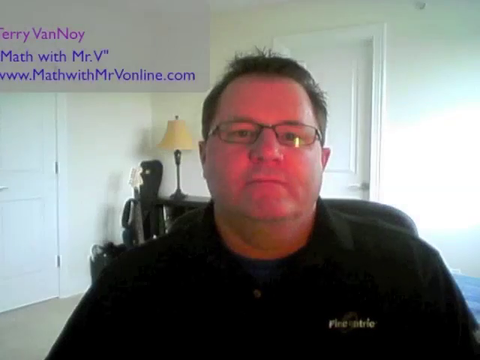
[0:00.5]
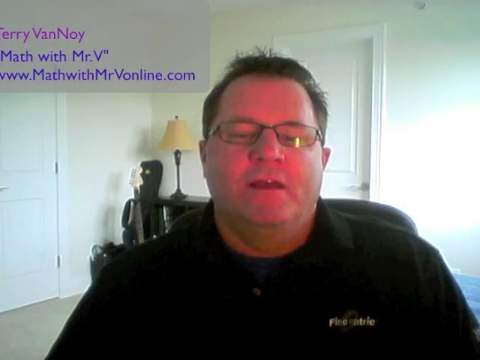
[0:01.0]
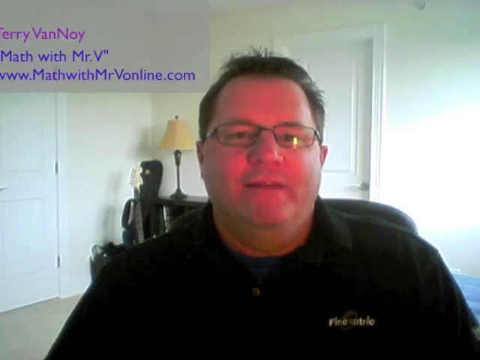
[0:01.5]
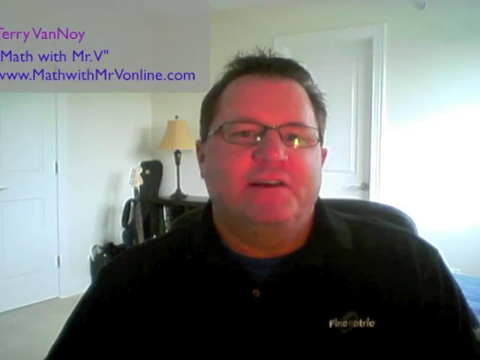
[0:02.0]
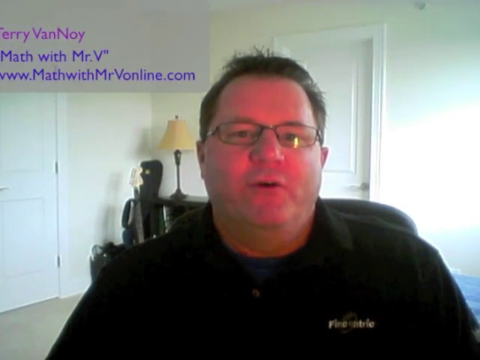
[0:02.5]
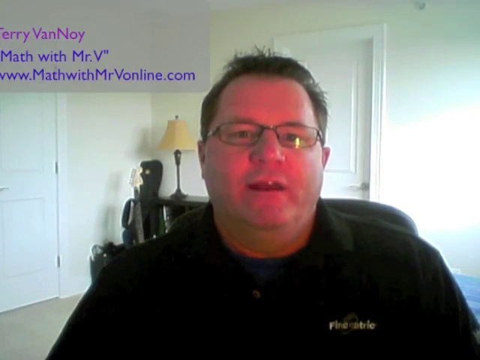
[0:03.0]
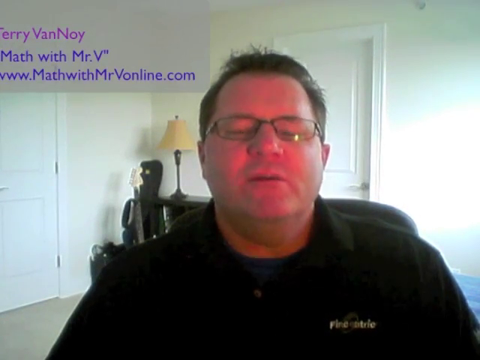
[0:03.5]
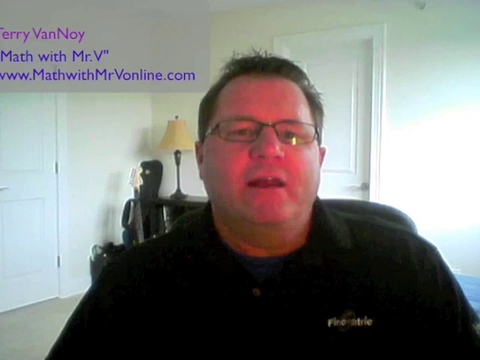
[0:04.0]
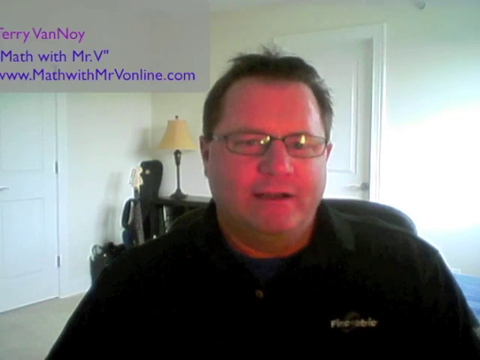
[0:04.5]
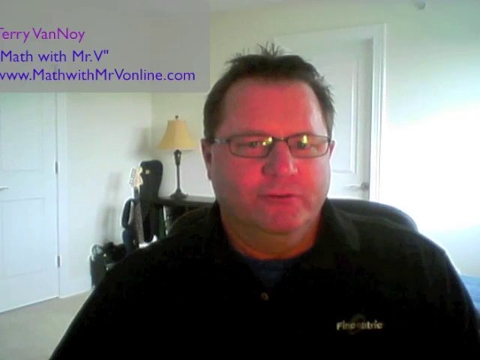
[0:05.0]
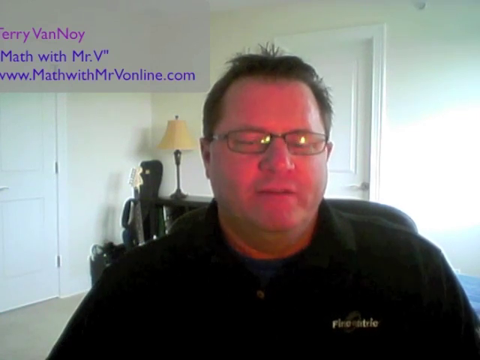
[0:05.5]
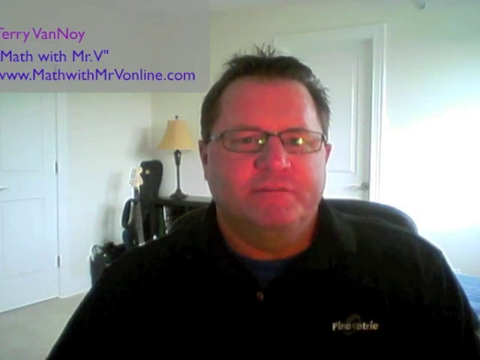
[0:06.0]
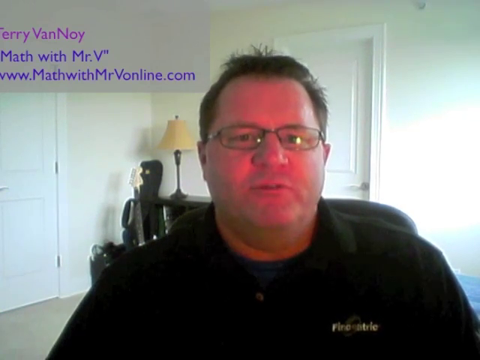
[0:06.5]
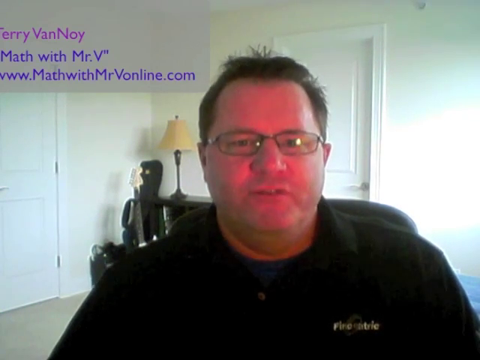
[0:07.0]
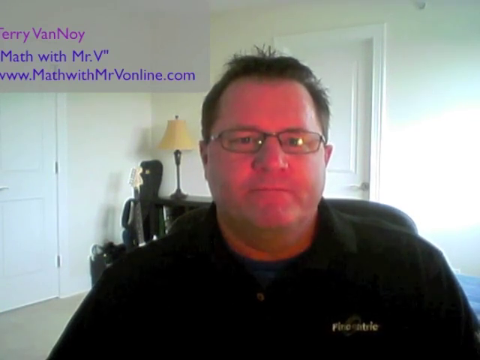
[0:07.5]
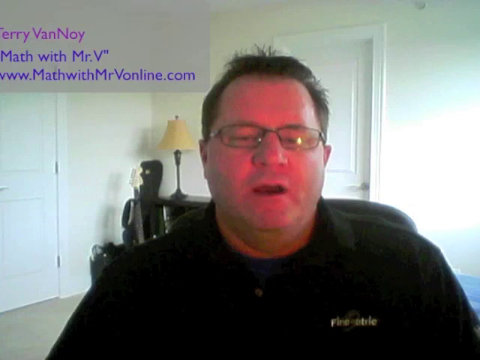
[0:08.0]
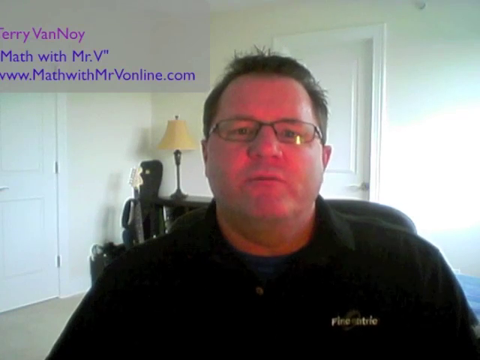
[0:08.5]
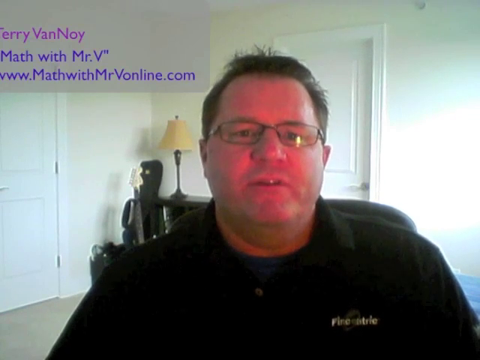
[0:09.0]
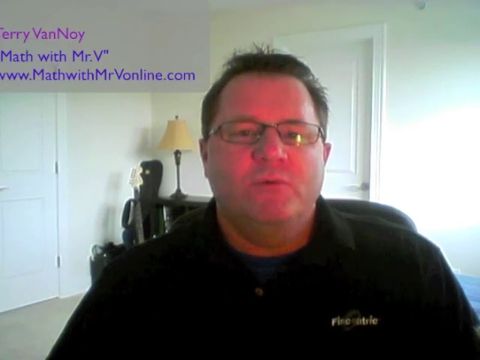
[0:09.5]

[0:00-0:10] A man who looks to be in his mid-30s to early 40s appears, wearing glasses, with his head tilted back slightly. He looks a little overweight and has short brown hair parted on the right, sticking up a little here and there. In the top right corner, text reads "Terry Von Noy math with Mr. V www.mathwithmrvonline.com". He wears a black button-up shirt and an undershirt, with writing on the shirt that cannot quite be read. As he talks, he bobs his head around a little and slowly leans forward, in and out.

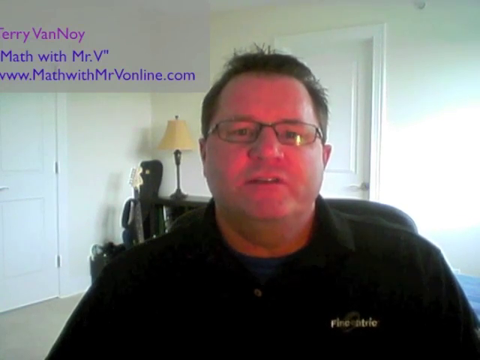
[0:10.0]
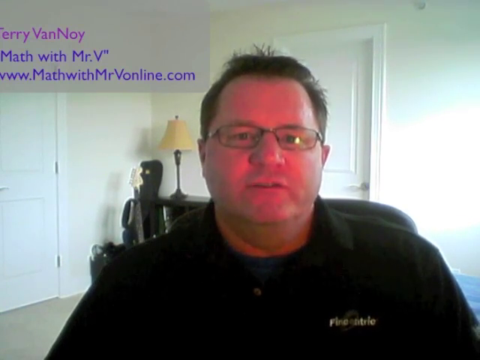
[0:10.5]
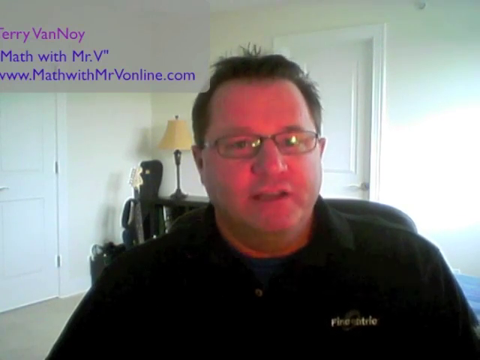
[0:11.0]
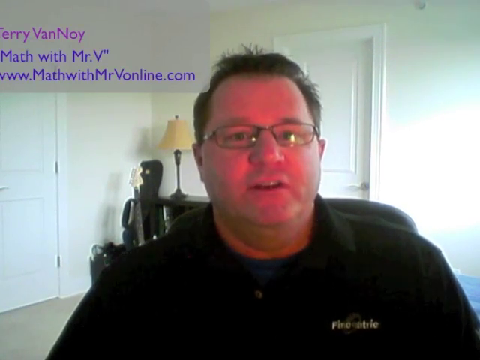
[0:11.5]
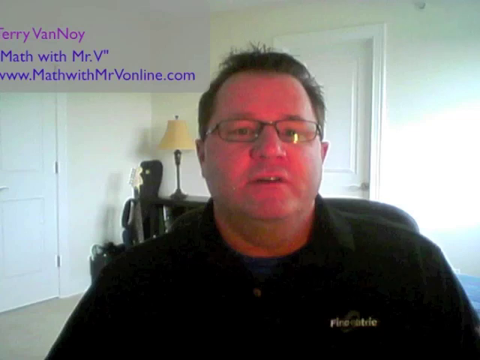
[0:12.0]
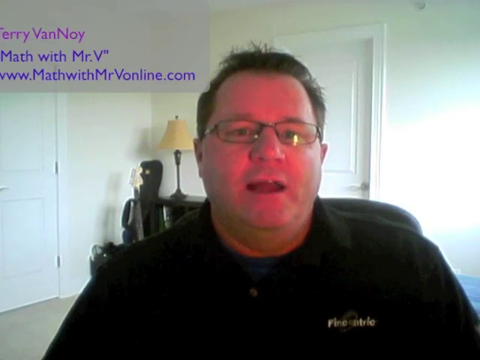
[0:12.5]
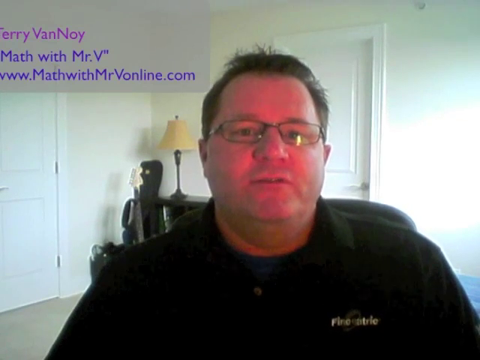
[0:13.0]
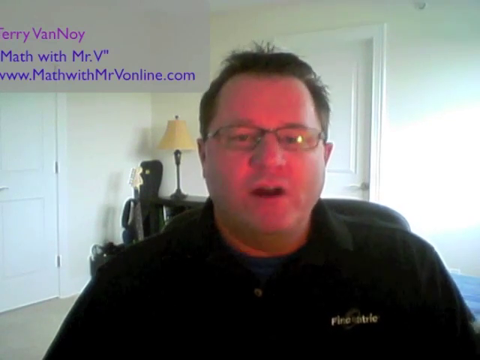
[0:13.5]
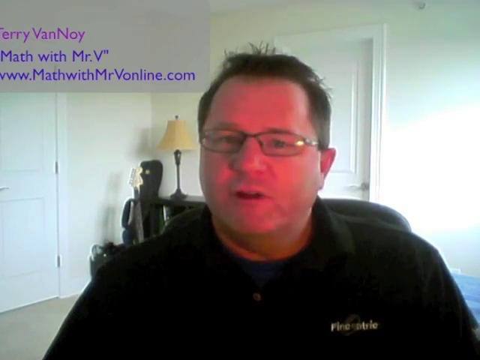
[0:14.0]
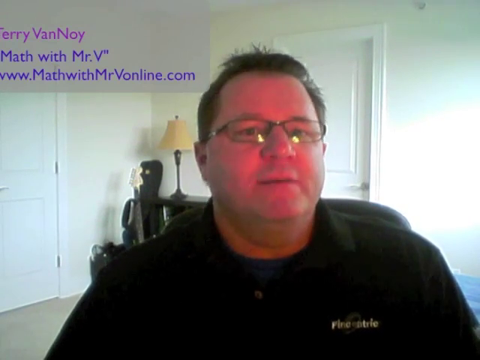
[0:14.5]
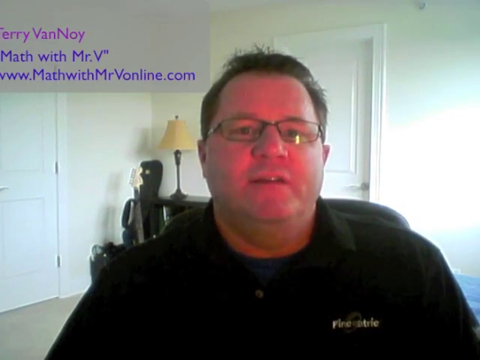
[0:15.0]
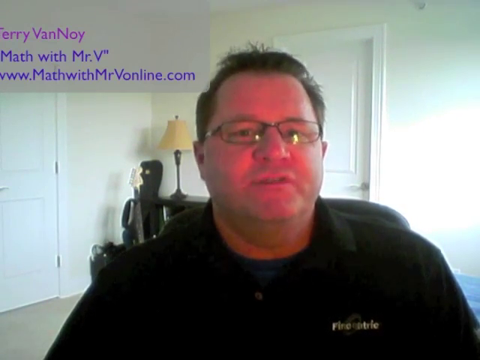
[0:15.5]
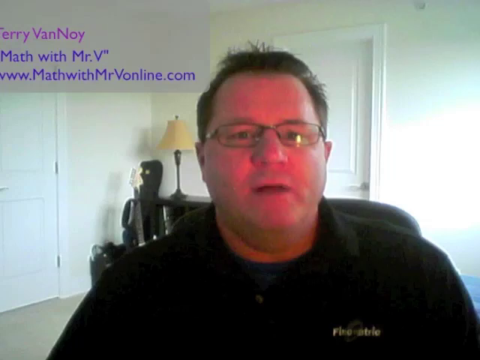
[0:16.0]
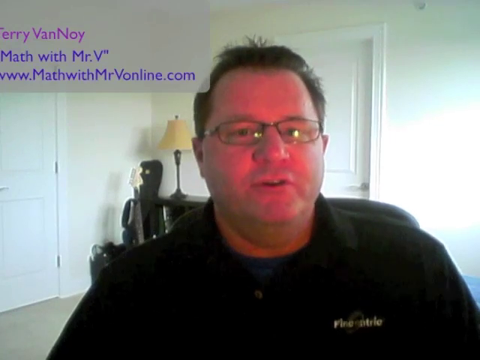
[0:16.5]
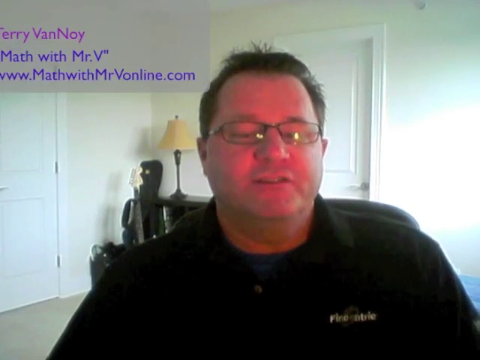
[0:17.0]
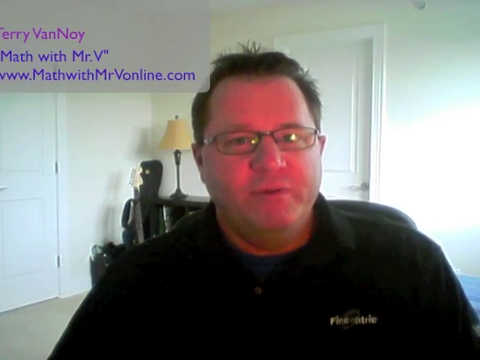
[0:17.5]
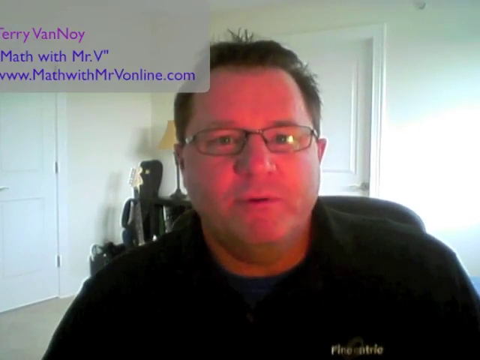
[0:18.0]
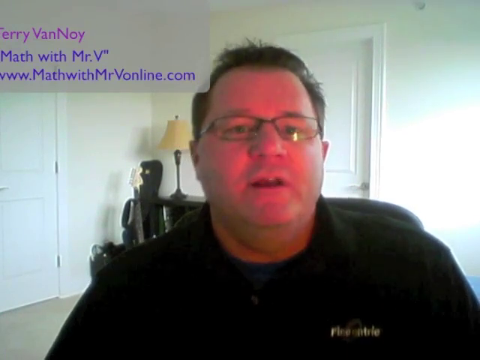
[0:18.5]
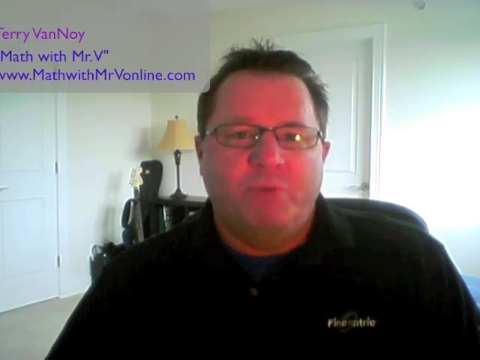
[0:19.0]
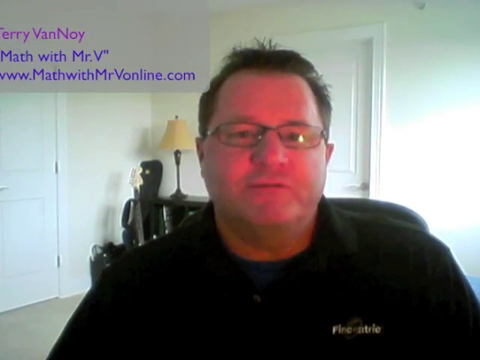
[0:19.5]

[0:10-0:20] A man sits in the center of the screen, talking. His face is a kind of rosy reddish color. He wears thin-framed glasses and has short brown hair parted on the right. He is a little overweight and wears a black button-up shirt with the collar folded down; on his left shoulder there is some writing that says something like "electric," with a symbol around it. At the top, text reads "Math with Mr. V www.mathwithmrvonline.com". He bobs his head around with agreeing and disagreeing gestures, leaning in and out and rocking in his chair as he talks, and seems very excited.